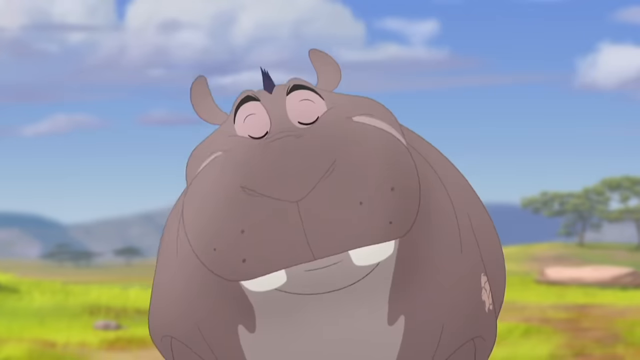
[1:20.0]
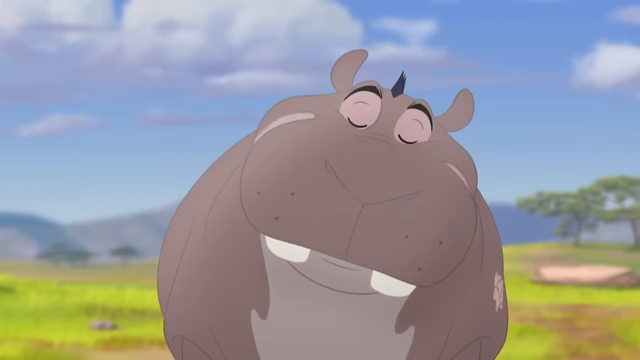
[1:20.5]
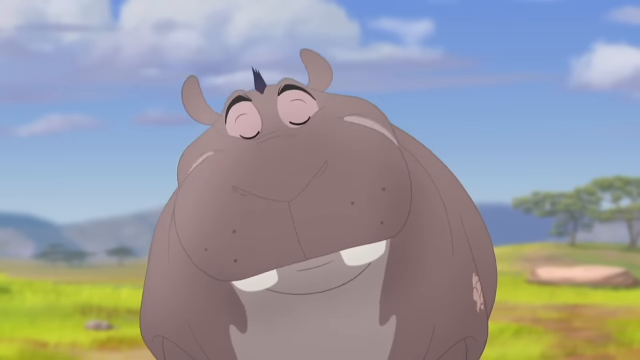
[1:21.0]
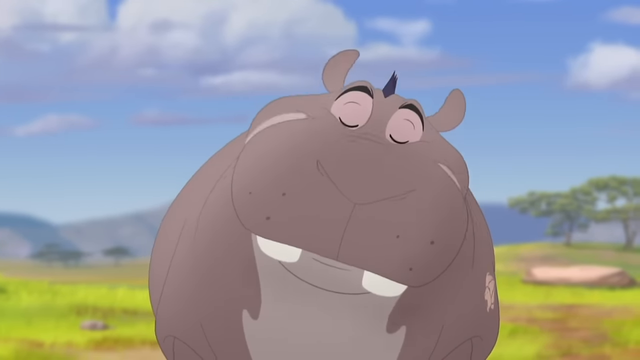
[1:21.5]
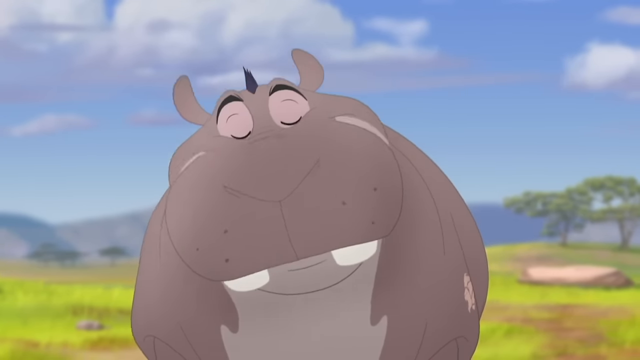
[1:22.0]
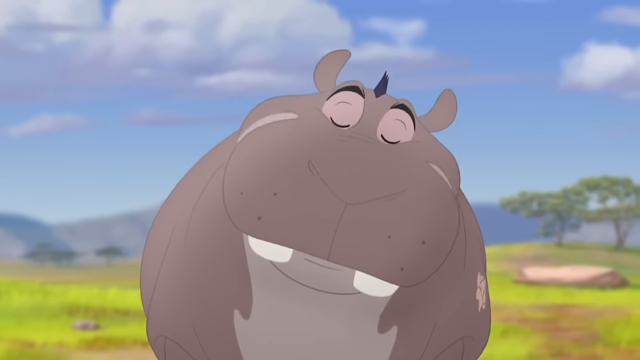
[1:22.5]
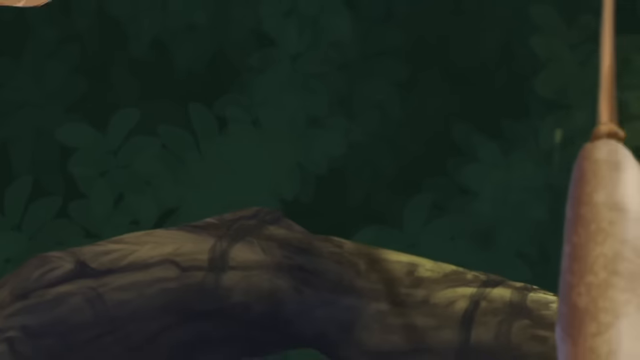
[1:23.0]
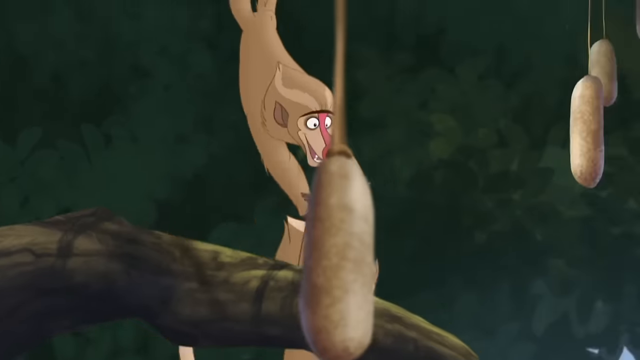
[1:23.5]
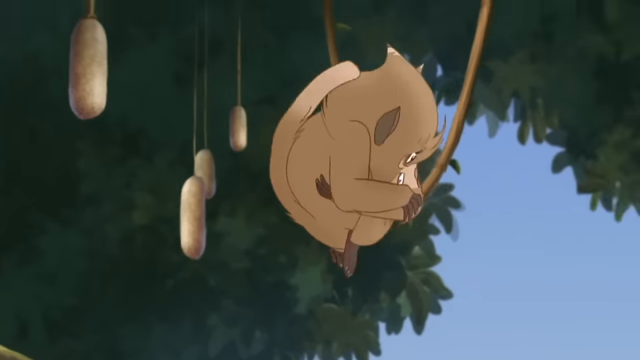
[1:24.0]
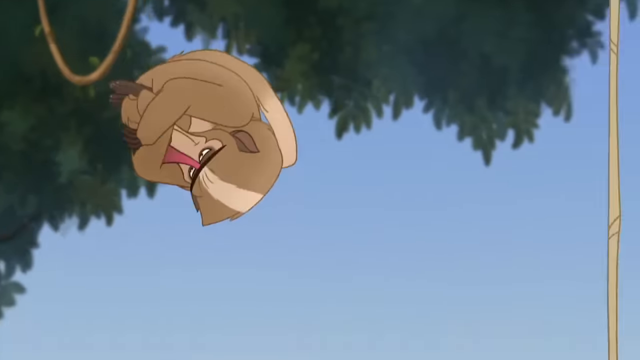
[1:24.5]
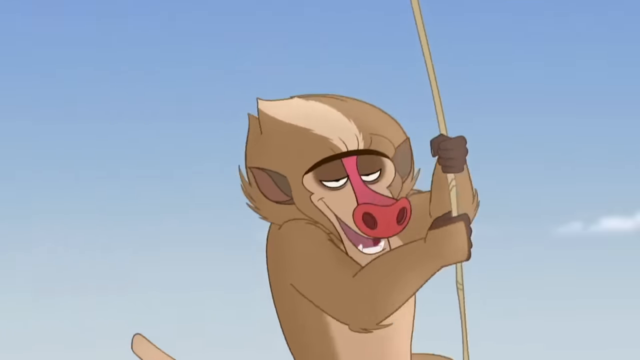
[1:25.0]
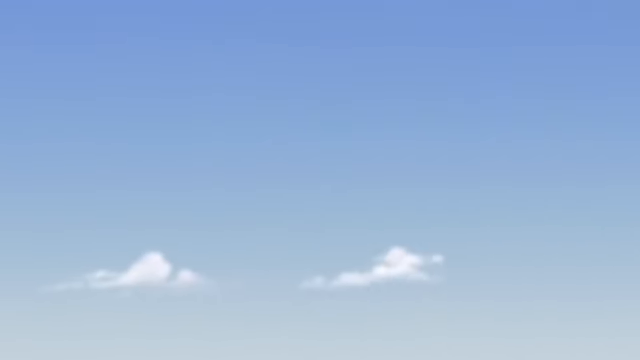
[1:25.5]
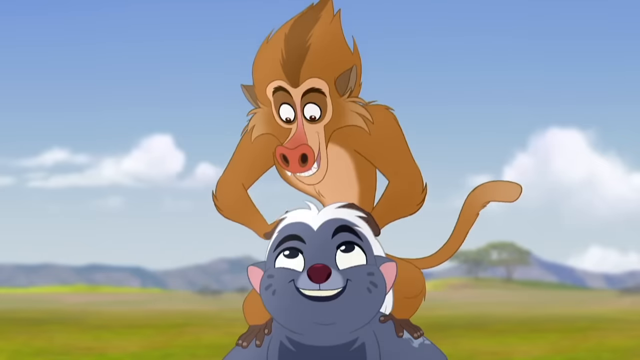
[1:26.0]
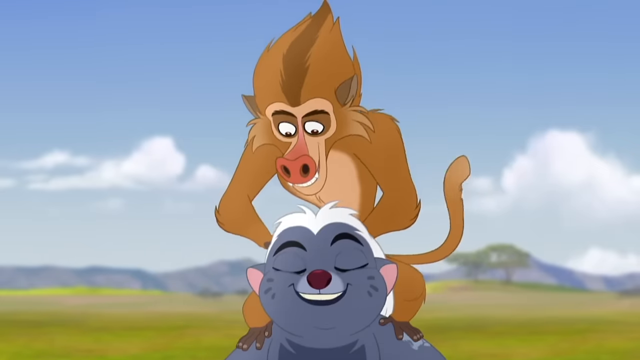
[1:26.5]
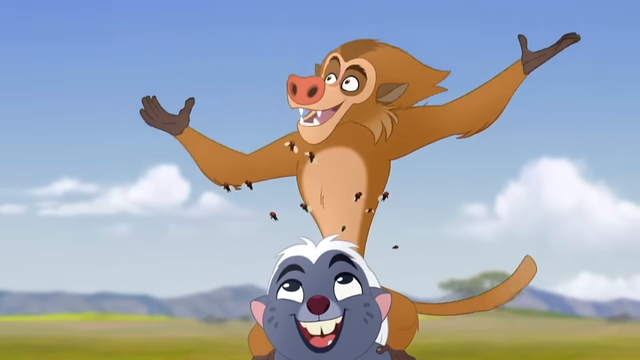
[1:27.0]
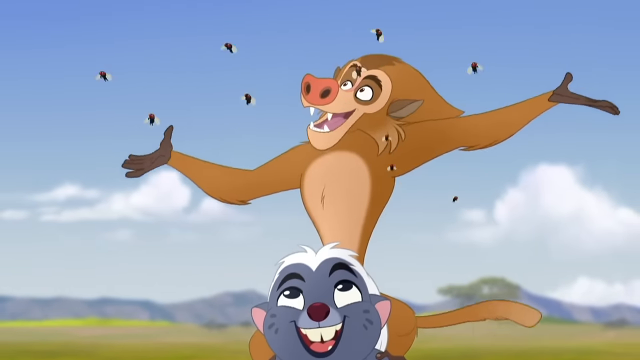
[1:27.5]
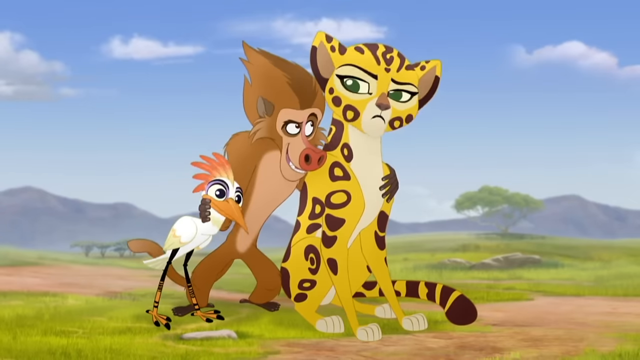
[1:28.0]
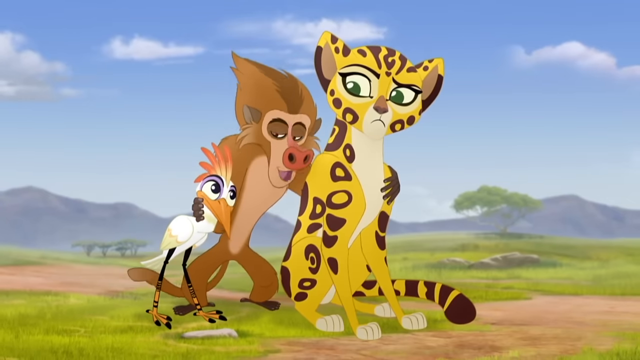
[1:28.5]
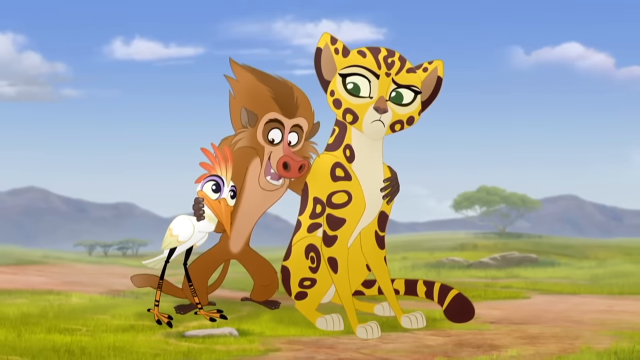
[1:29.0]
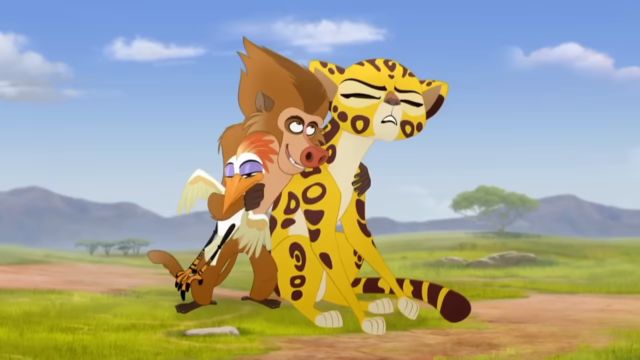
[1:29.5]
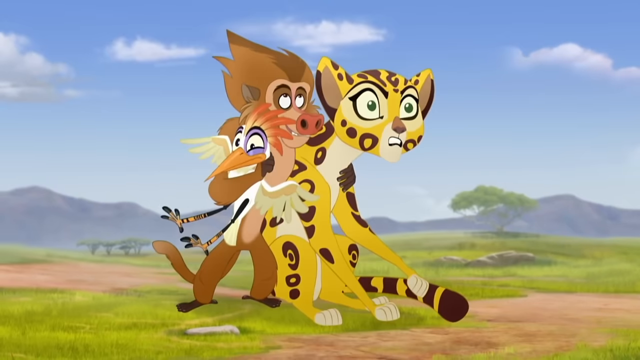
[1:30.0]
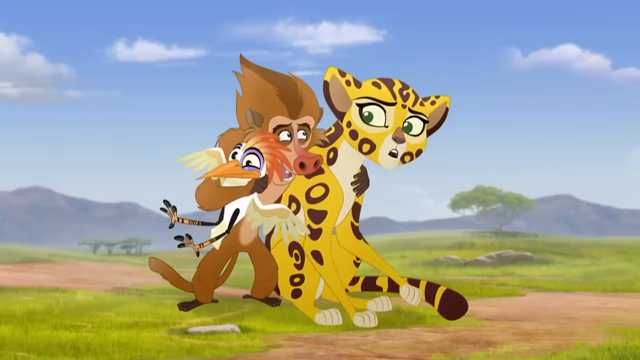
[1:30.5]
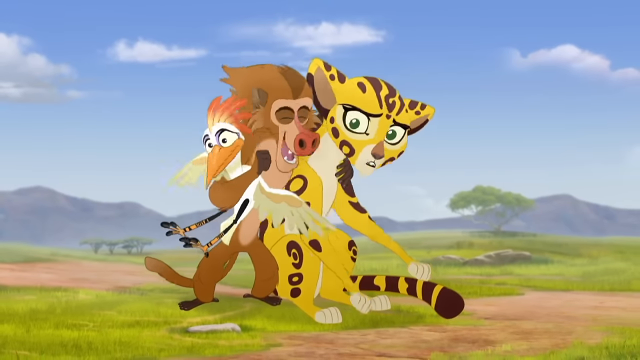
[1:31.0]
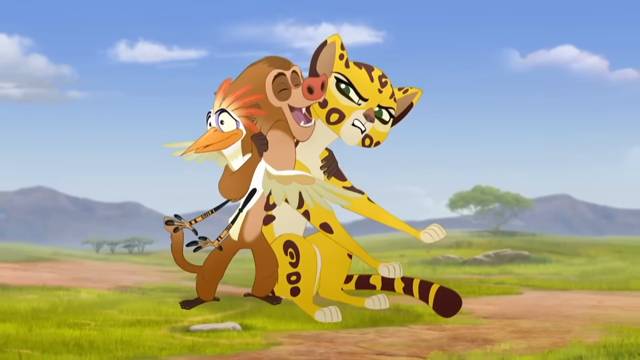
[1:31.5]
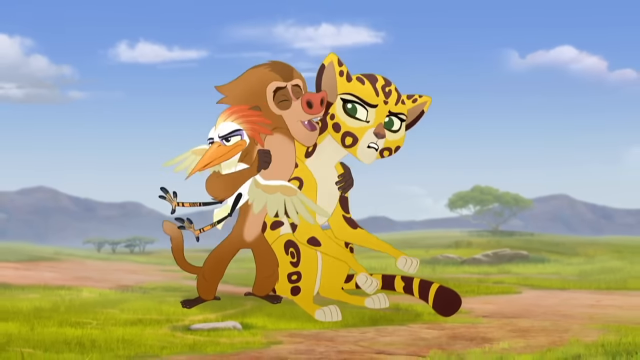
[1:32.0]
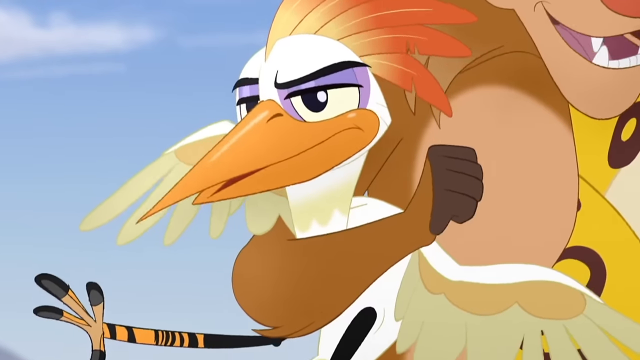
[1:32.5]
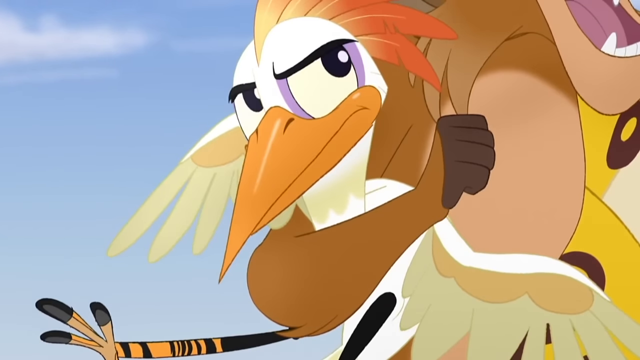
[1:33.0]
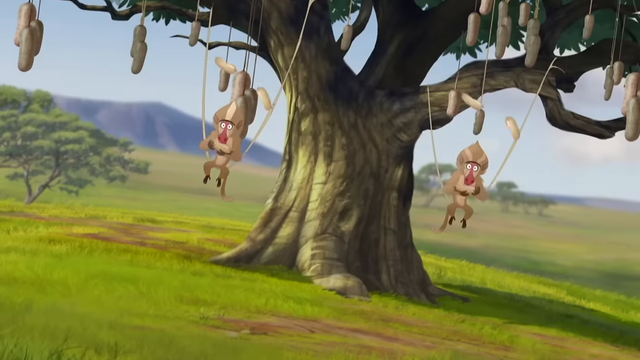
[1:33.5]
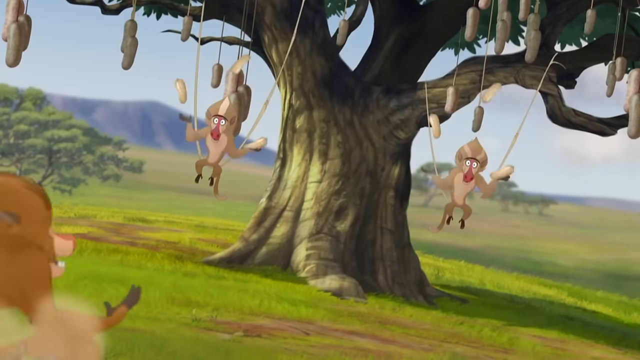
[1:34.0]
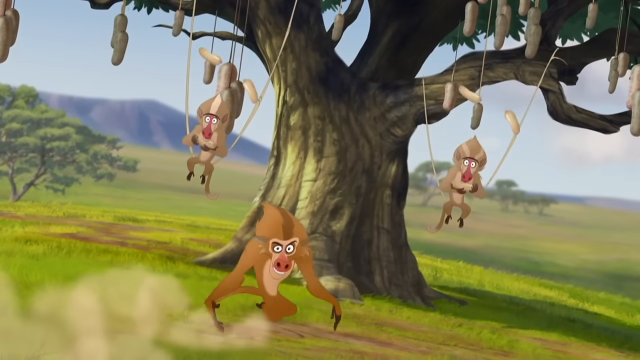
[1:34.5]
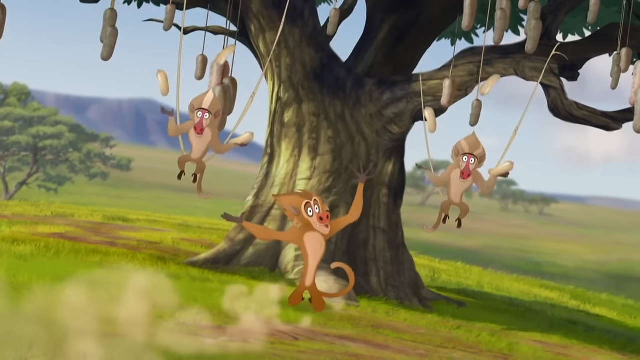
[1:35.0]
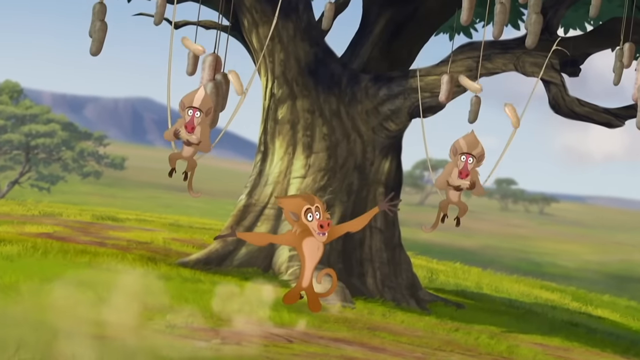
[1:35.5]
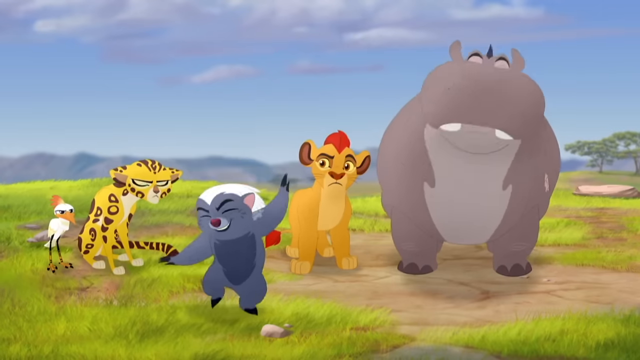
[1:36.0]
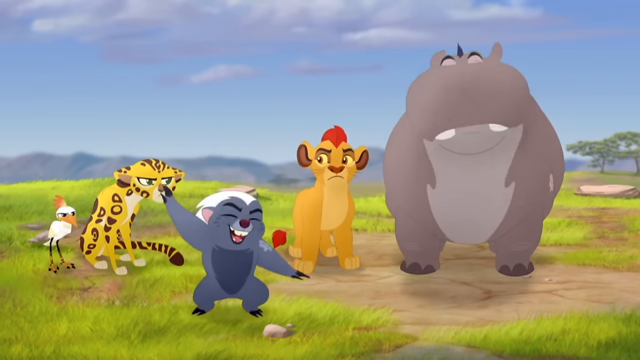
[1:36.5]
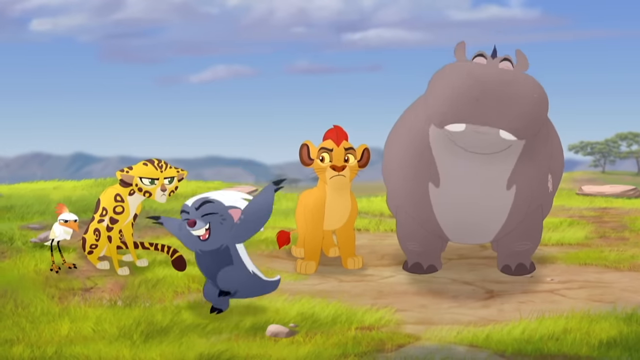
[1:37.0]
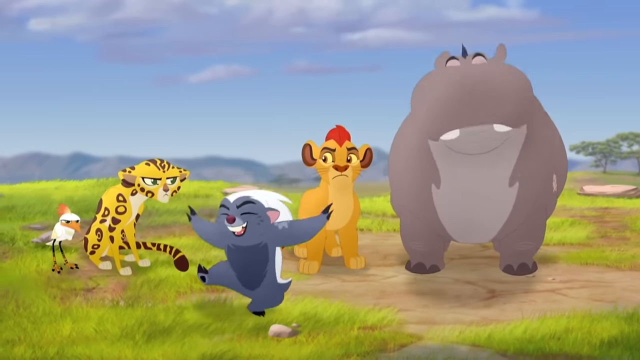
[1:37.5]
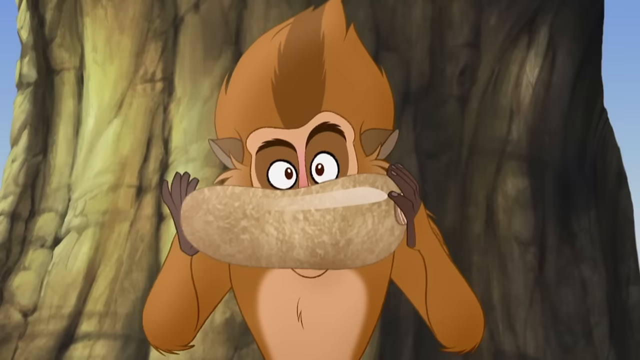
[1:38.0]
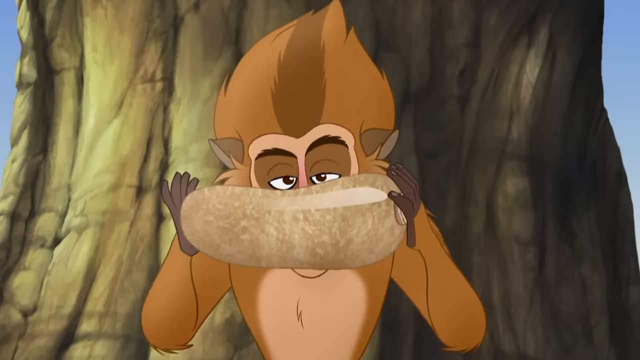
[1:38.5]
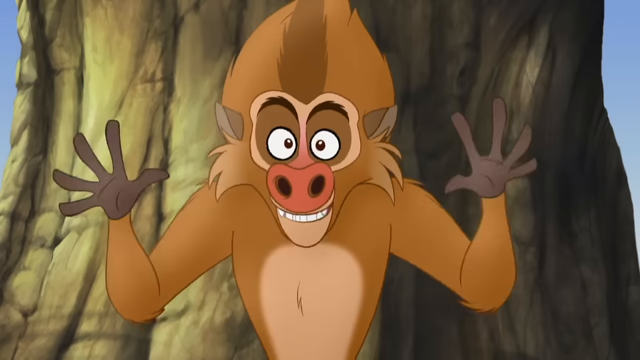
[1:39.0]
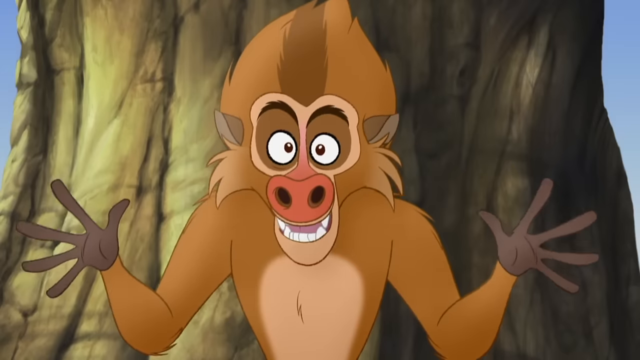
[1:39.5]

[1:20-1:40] The gray hippopotamus is dancing, rocking back and forth, with blue sky, some mountains and some trees in the background. The scene cuts back to the tree, where the two lighter baboons swing back and forth, do flips in the air and grab onto vines. The darker brown baboon is now sitting with the raccoon-looking animal, seemingly combing through its hair as if picking out bugs, and suddenly a bunch of flies come out of its hair; the baboon puts his arms up in the air. He then hugs the cheetah and the little white bird, who both look very annoyed and do not want him touching them. This is a musical montage in which the baboons are trying to convince Simba and his friends into something. Back at the tree, the two lighter baboons hang in the vines juggling the sausage-looking things while the darker baboon knee-slides into the frame, still singing. The scene cuts to Simba, the hippopotamus, the raccoon-looking animal, the cheetah and the white bird; the hippopotamus and the raccoon-like animal are still dancing while Simba, the cheetah and the white bird look very annoyed. Finally the baboon in front of the tree holds one of the sausage-looking plants, closes his hands, and it is gone.